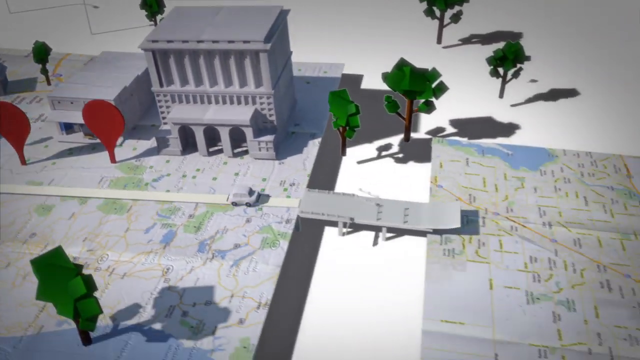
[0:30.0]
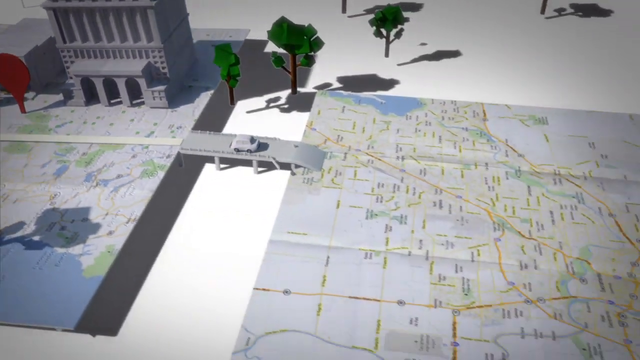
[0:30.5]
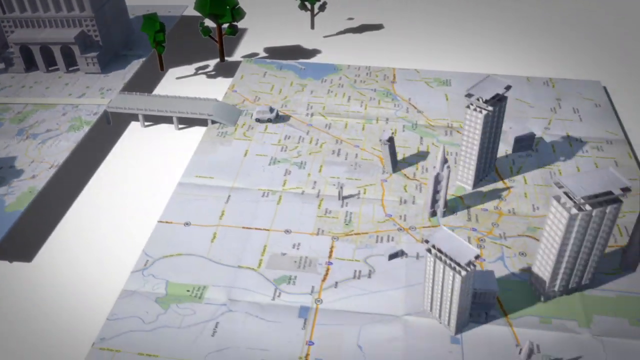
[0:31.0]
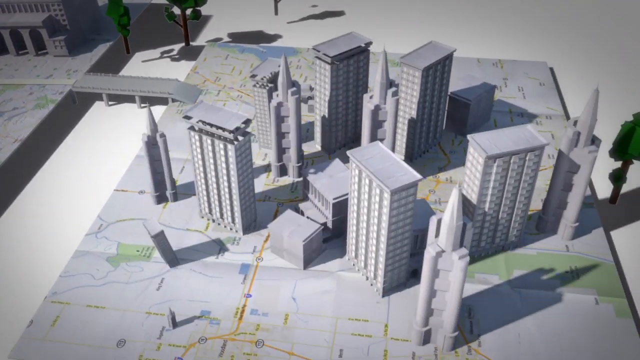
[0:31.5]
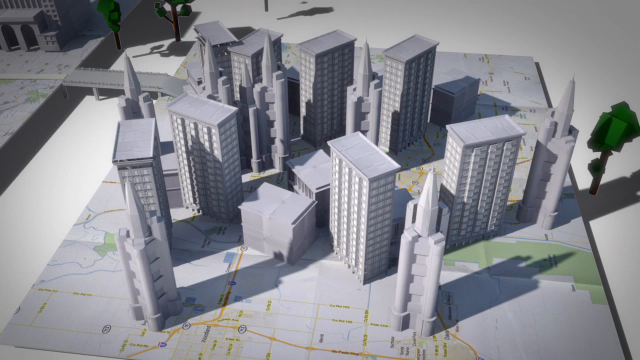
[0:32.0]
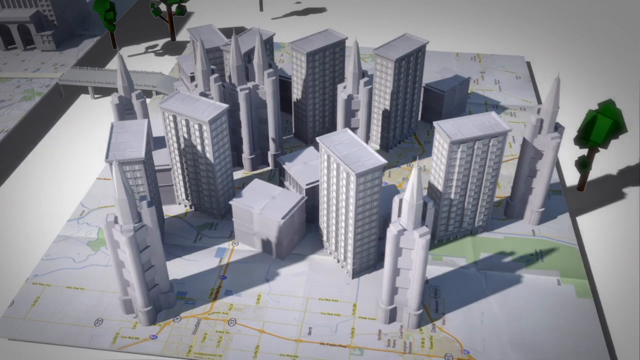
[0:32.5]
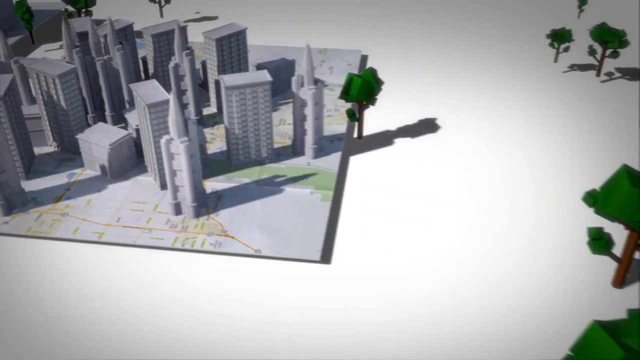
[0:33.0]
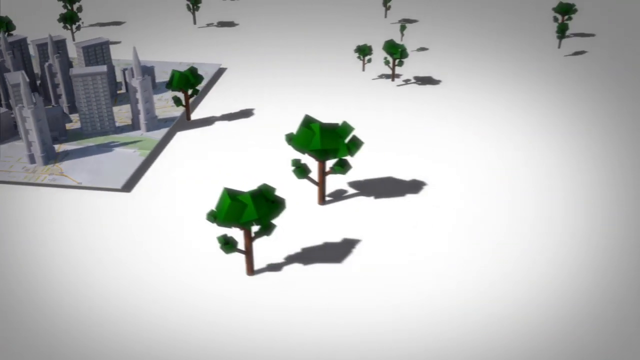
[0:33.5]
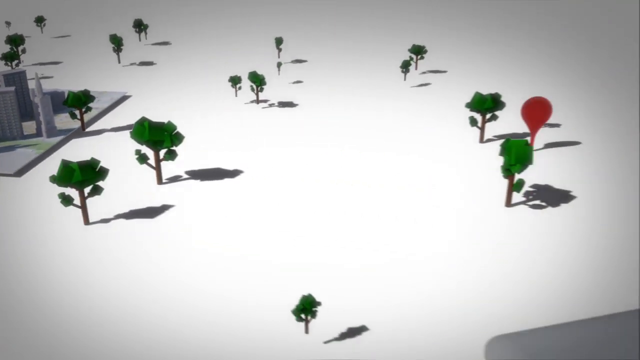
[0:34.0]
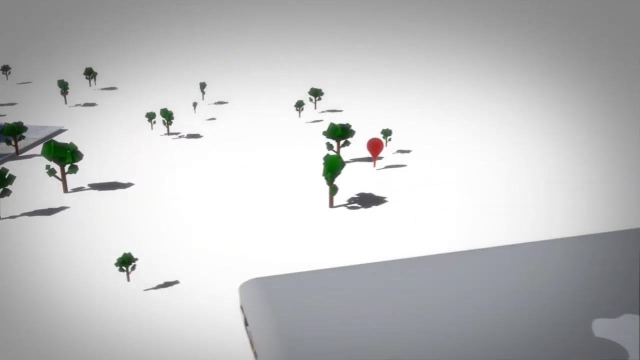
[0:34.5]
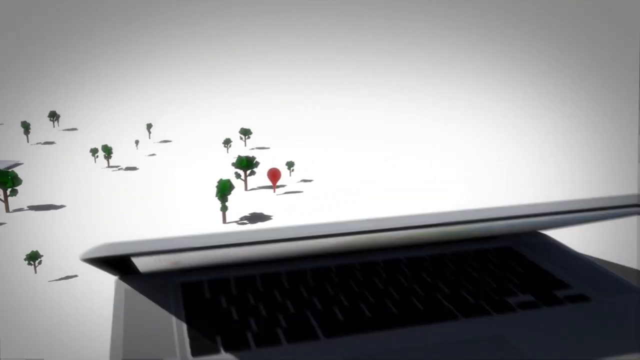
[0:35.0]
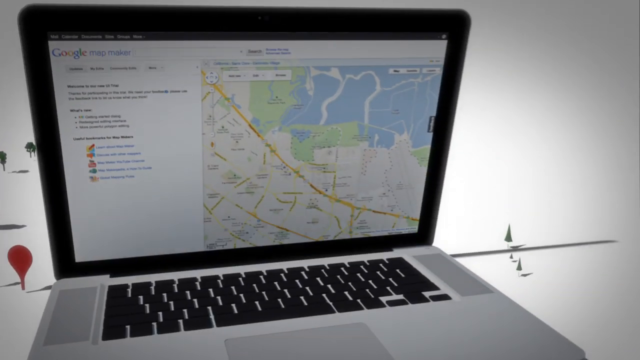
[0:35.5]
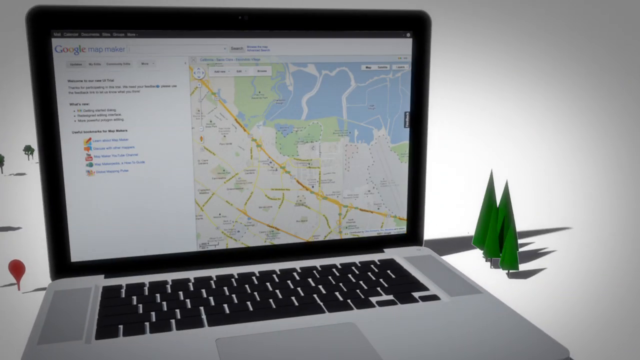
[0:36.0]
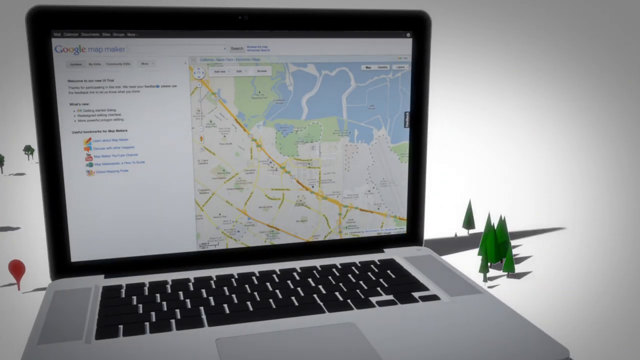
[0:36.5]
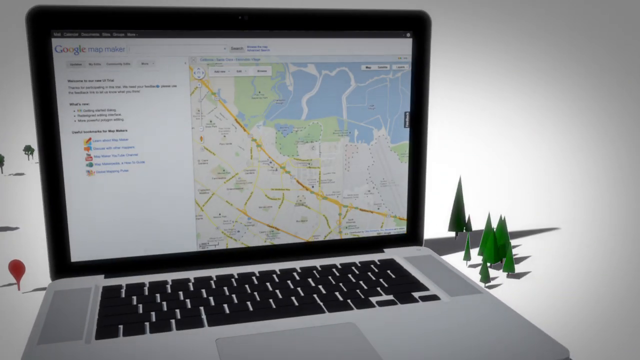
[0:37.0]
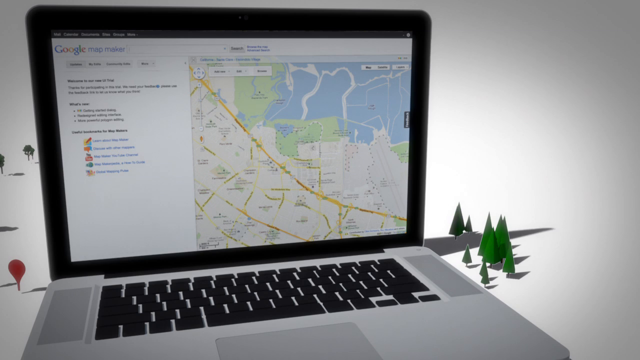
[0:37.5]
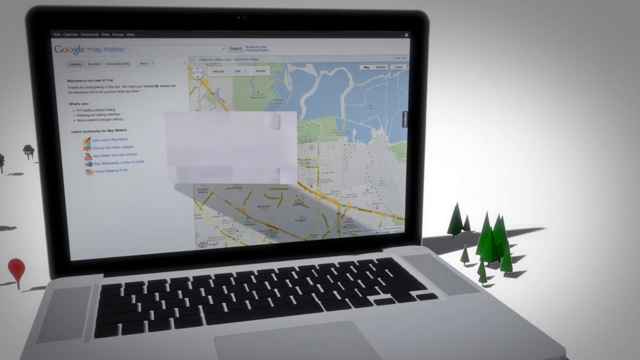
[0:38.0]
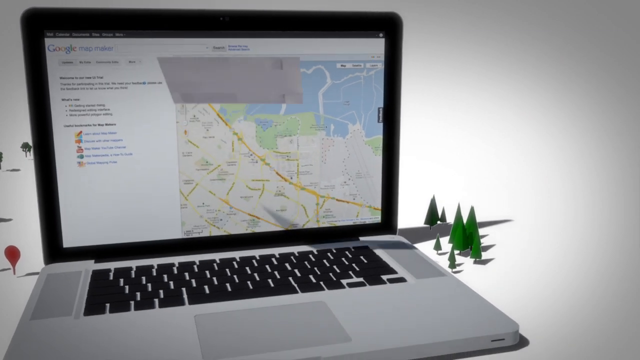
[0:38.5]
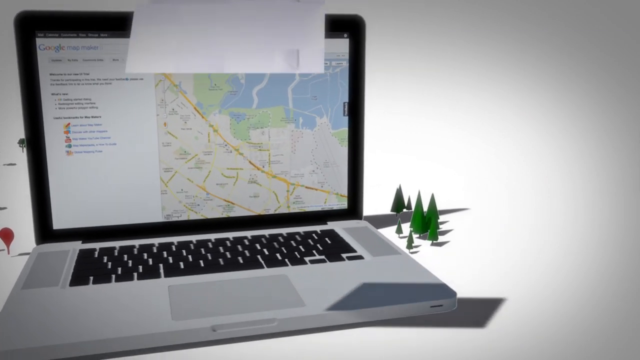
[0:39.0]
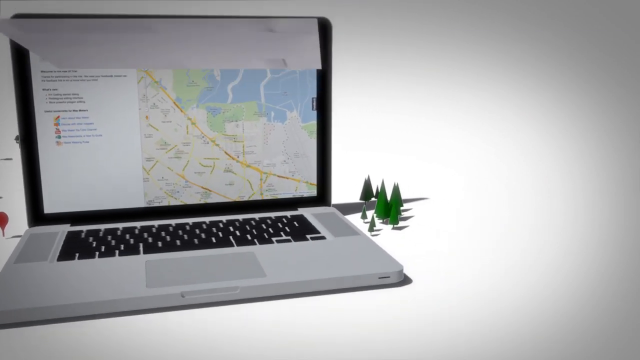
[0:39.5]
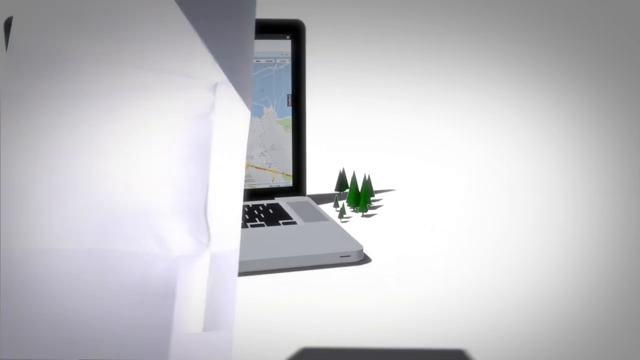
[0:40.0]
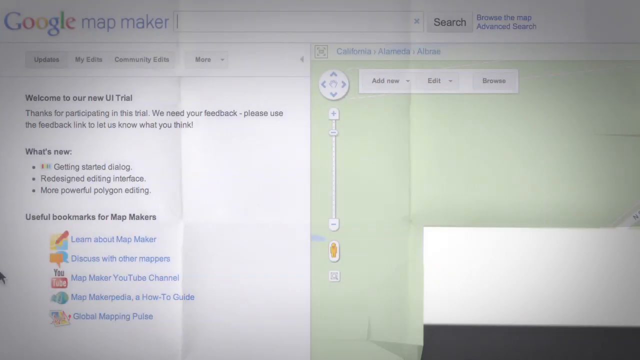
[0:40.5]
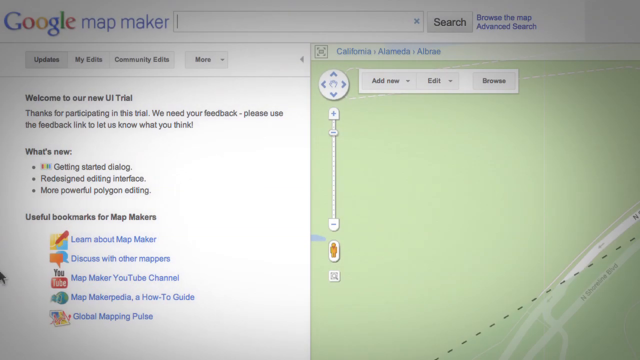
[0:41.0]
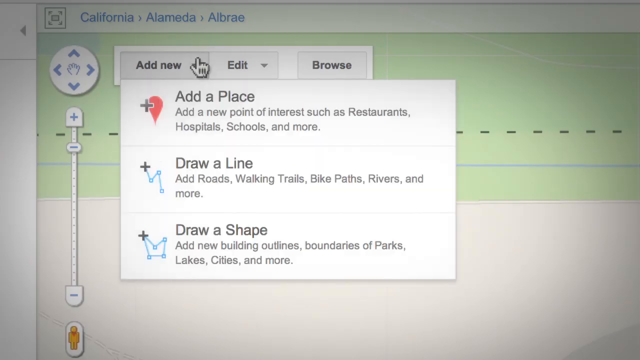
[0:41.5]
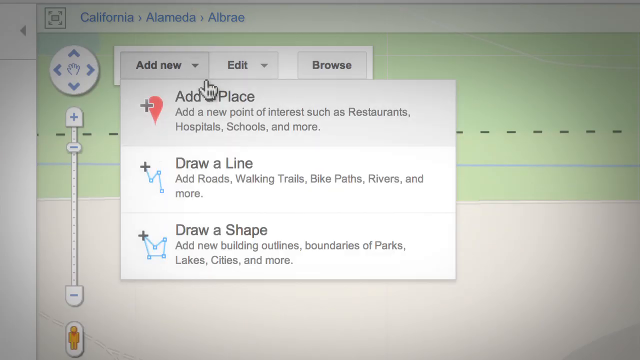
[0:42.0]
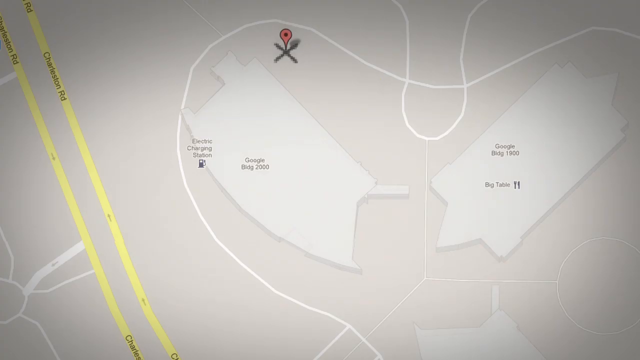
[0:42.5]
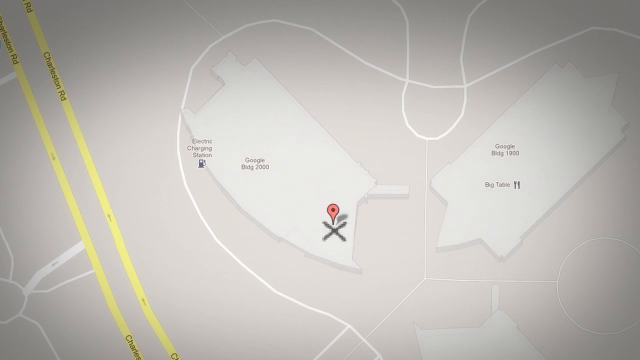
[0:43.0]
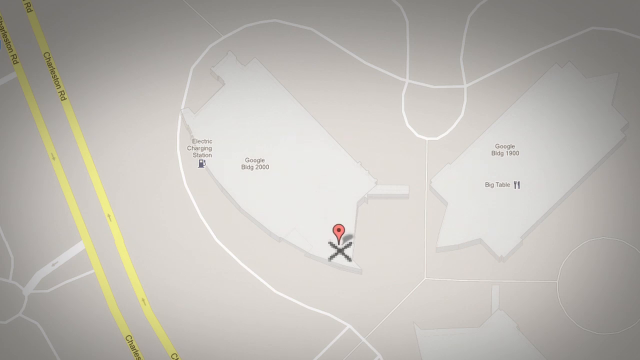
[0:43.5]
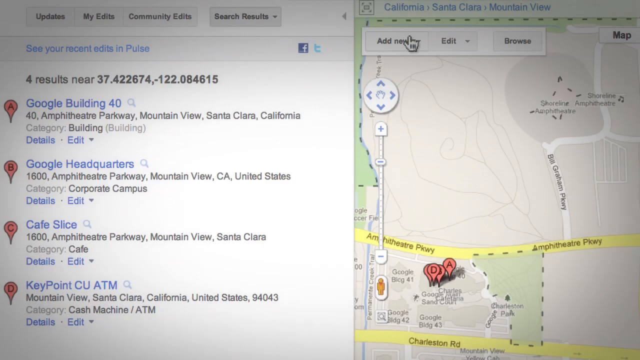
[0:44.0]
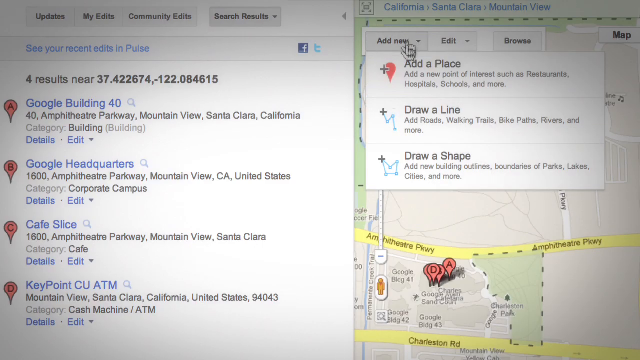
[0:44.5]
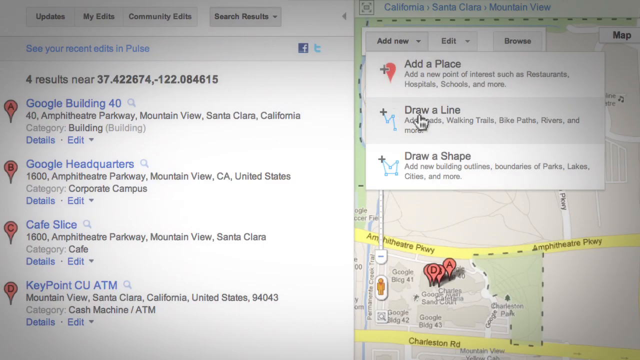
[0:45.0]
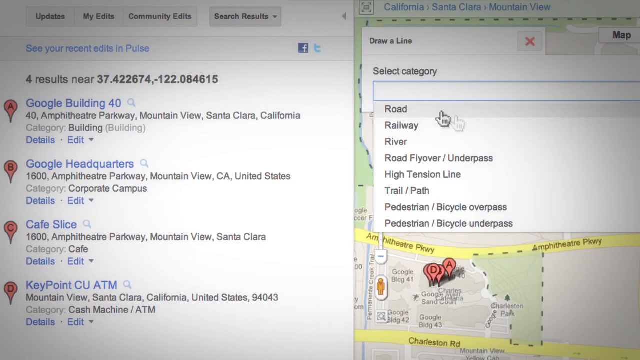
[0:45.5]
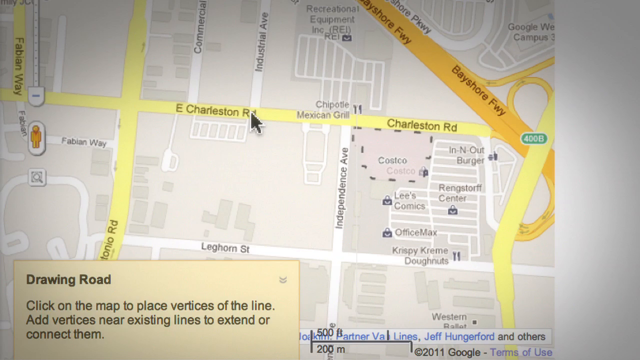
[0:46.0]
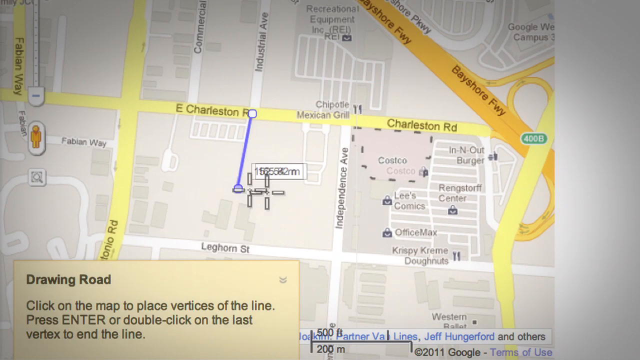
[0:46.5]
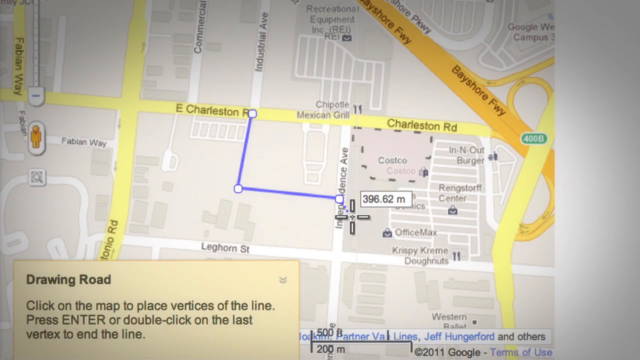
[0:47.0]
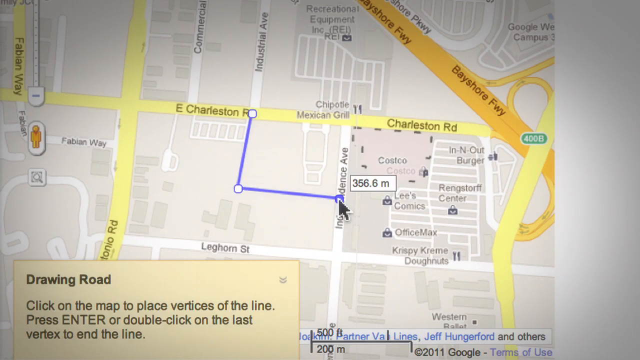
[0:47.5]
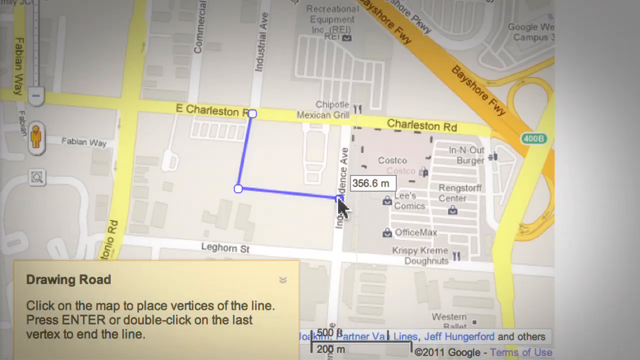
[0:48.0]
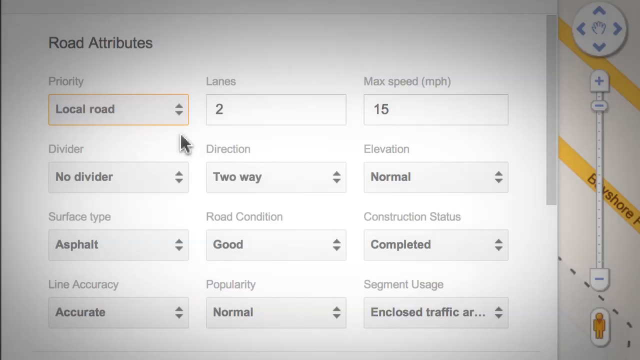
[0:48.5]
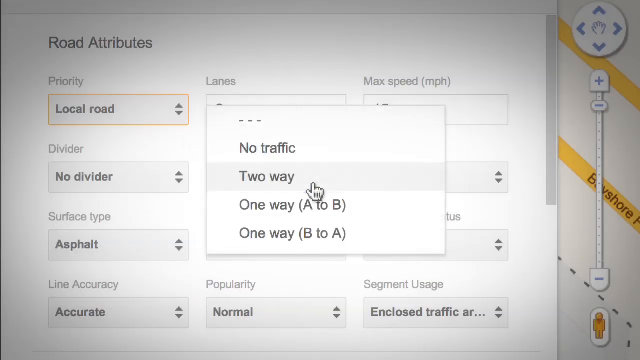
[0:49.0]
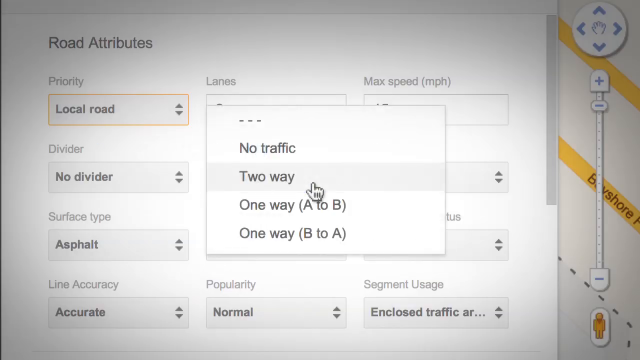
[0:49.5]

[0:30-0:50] A map with white graphics unfolds, and a little car zooms onto a bridge onto another part of the map. Then a laptop with the Apple icon opens and shows a map with directions on it. The screen demonstrates how to add a place and edit different things on the map, such as adding pinpoints and drawing a line, and how to fix road attributes on the map being created. It looks almost like an advanced way to make directions for a place.